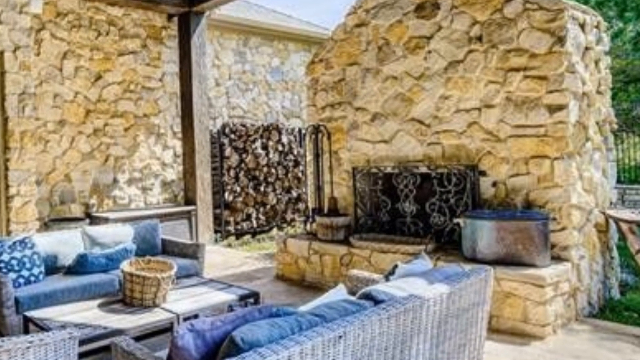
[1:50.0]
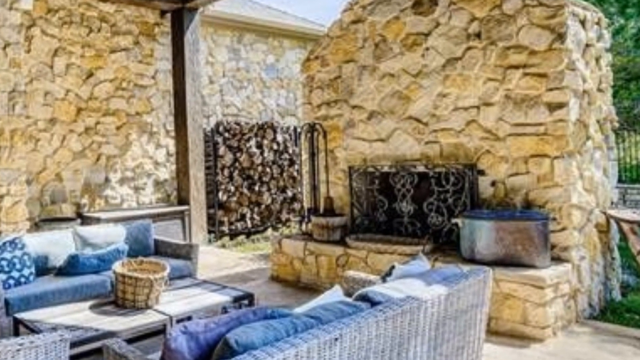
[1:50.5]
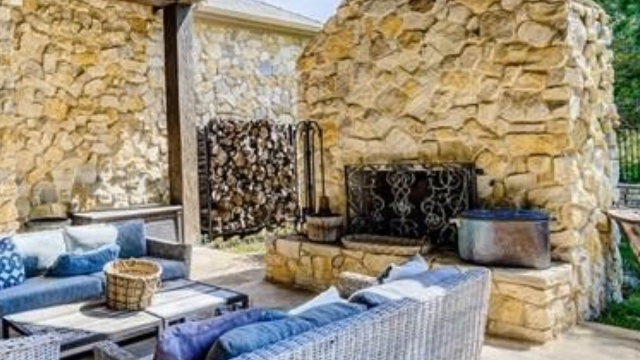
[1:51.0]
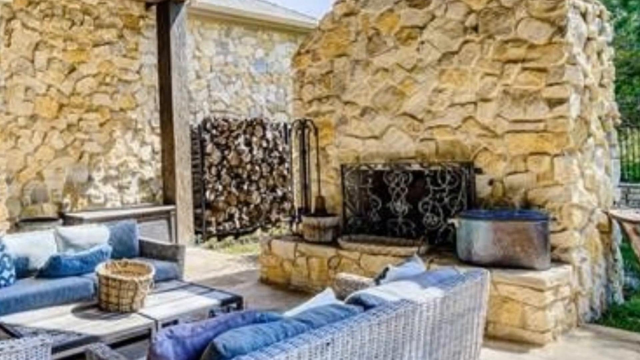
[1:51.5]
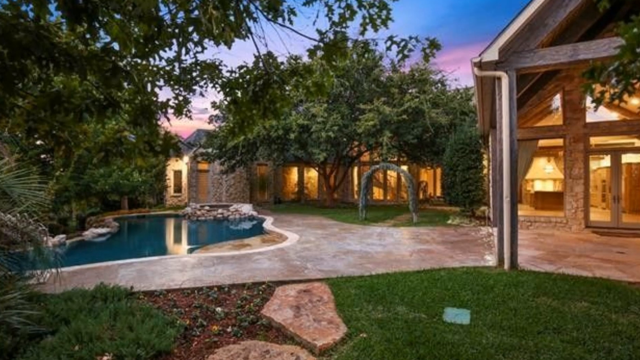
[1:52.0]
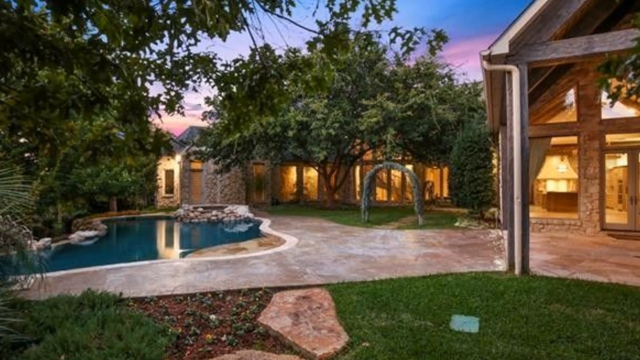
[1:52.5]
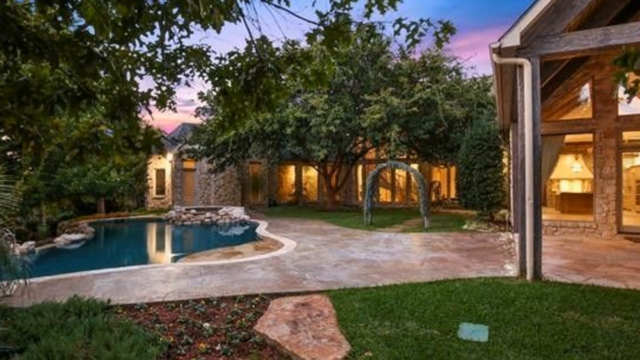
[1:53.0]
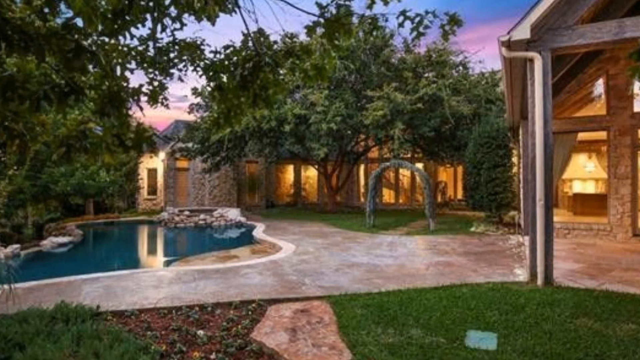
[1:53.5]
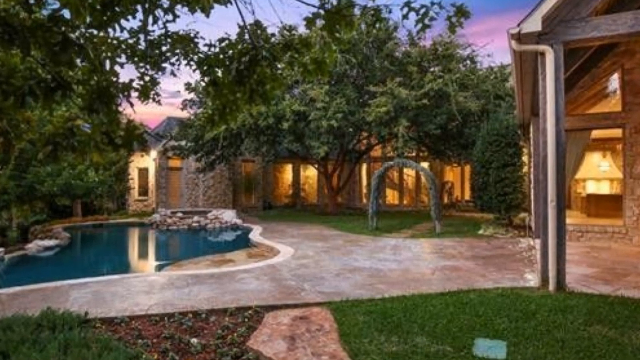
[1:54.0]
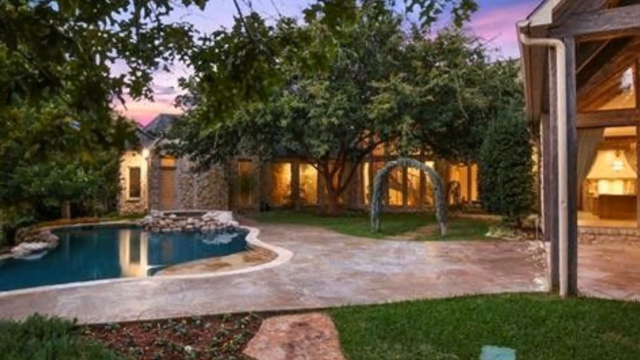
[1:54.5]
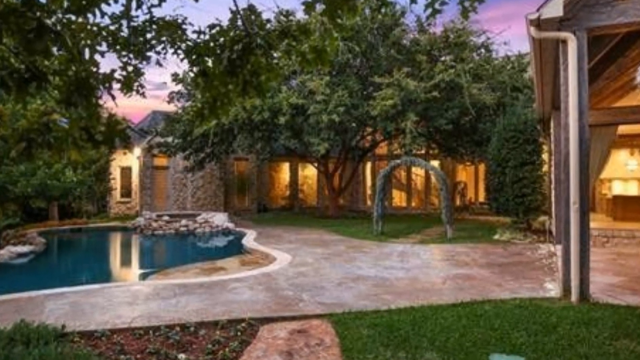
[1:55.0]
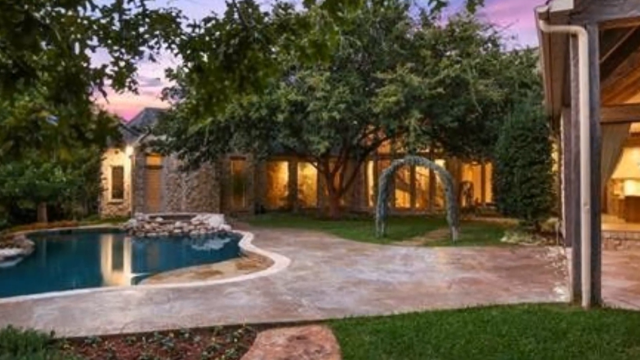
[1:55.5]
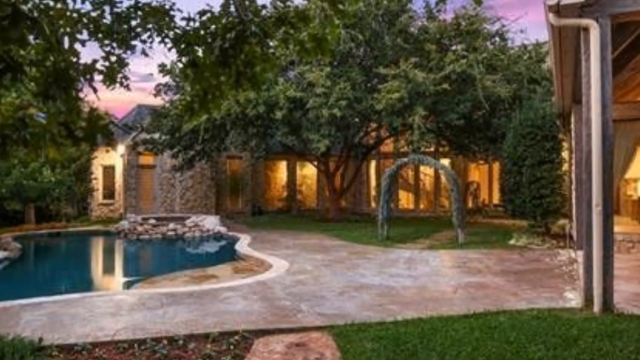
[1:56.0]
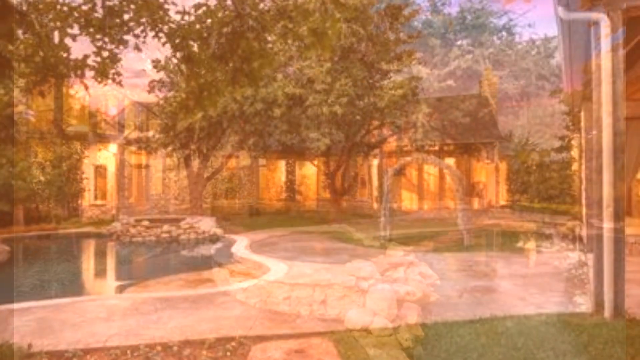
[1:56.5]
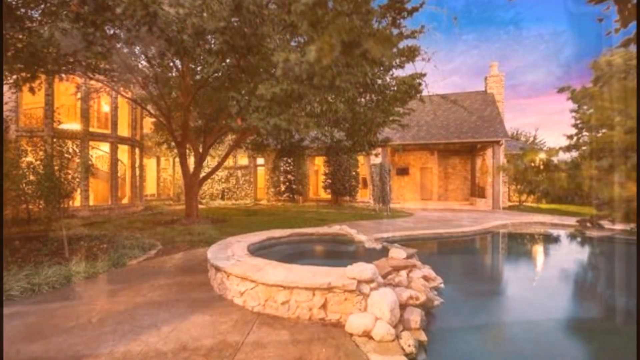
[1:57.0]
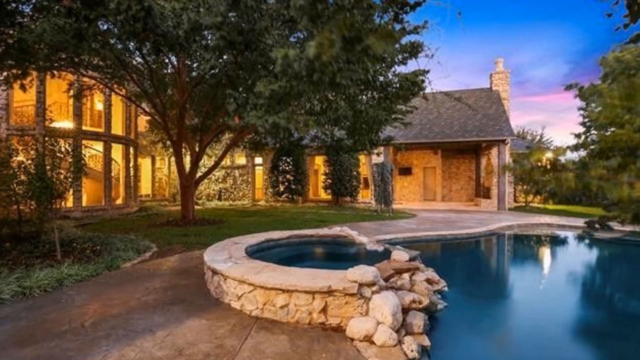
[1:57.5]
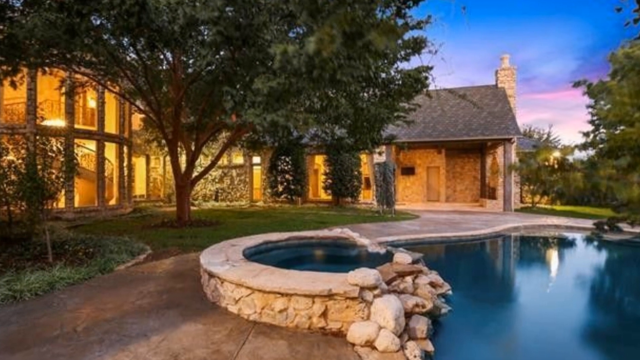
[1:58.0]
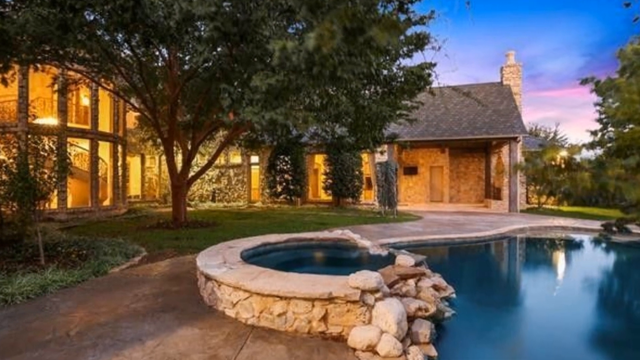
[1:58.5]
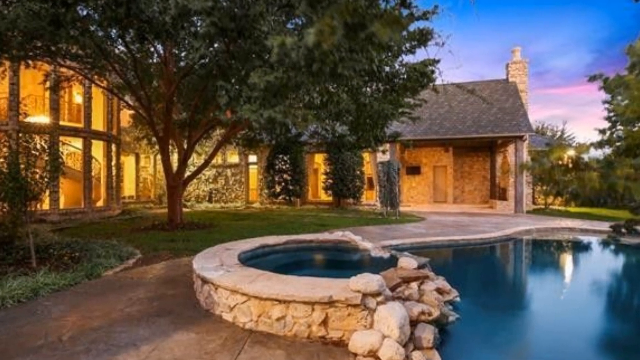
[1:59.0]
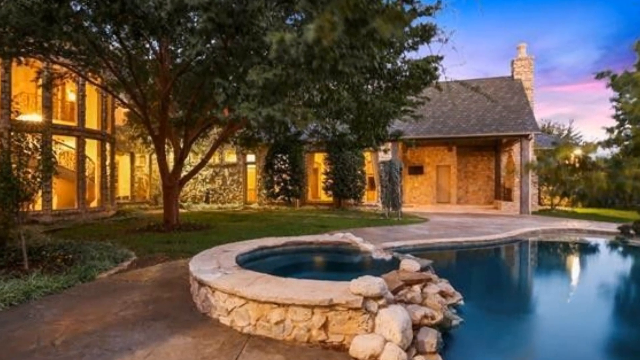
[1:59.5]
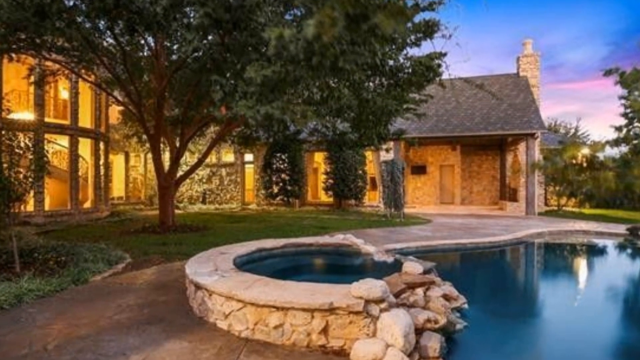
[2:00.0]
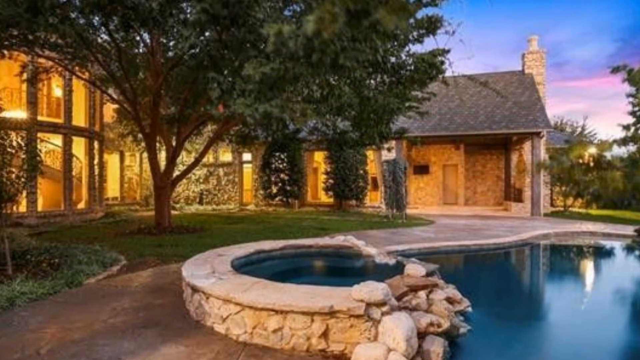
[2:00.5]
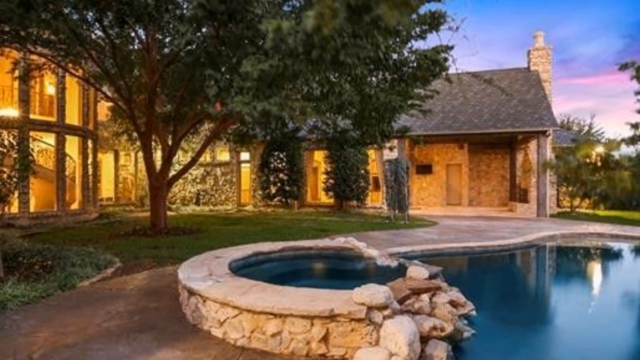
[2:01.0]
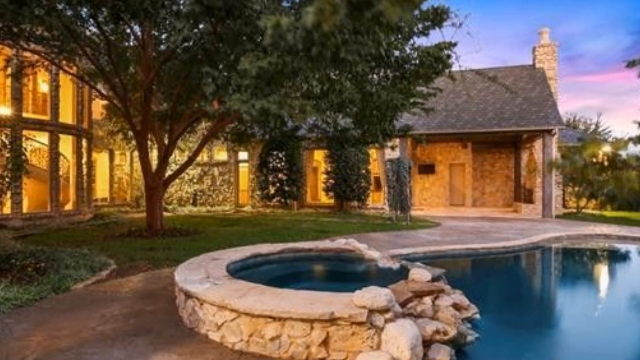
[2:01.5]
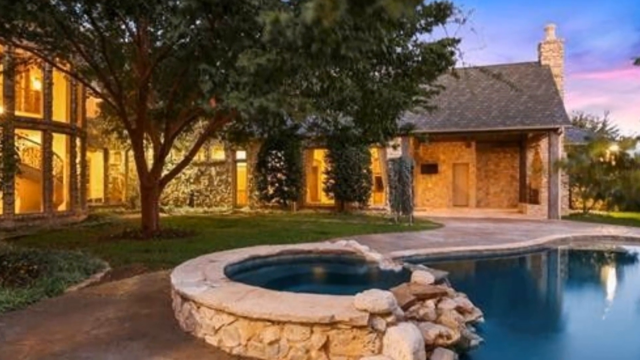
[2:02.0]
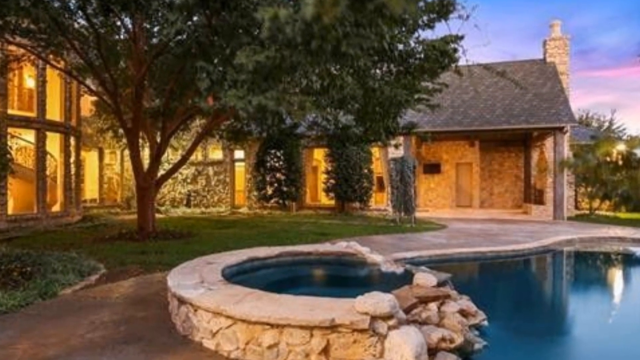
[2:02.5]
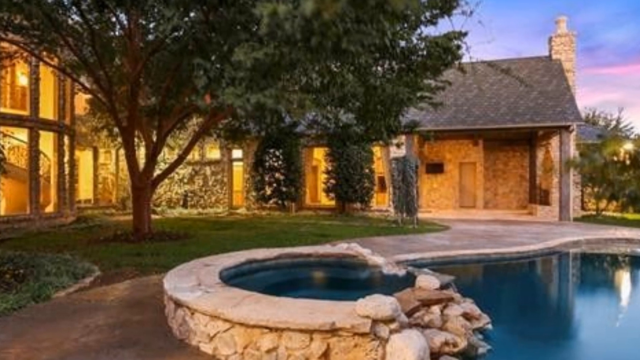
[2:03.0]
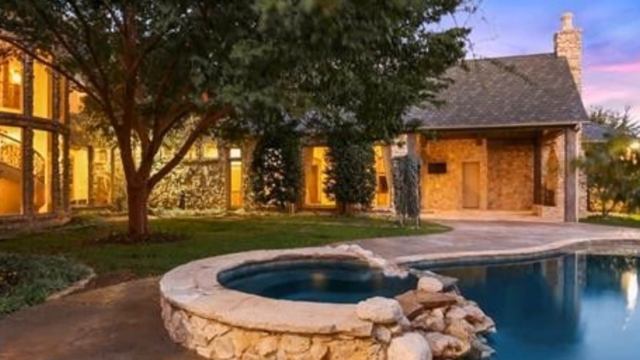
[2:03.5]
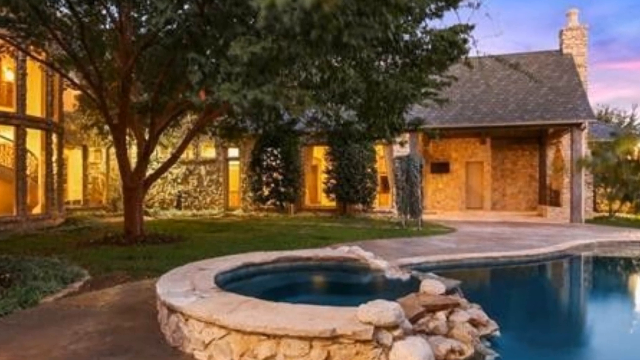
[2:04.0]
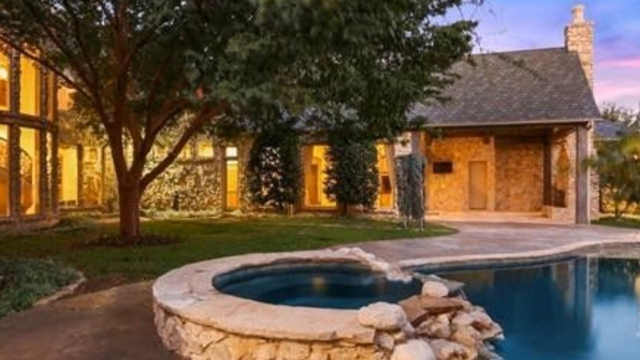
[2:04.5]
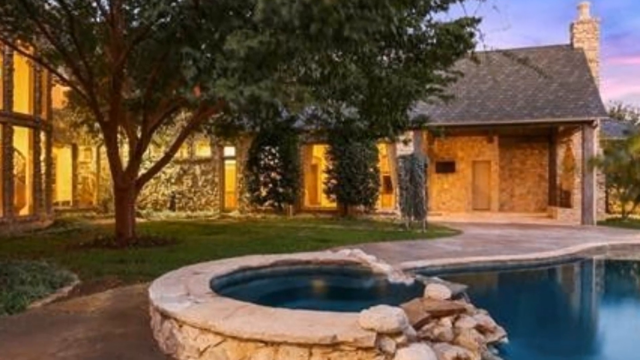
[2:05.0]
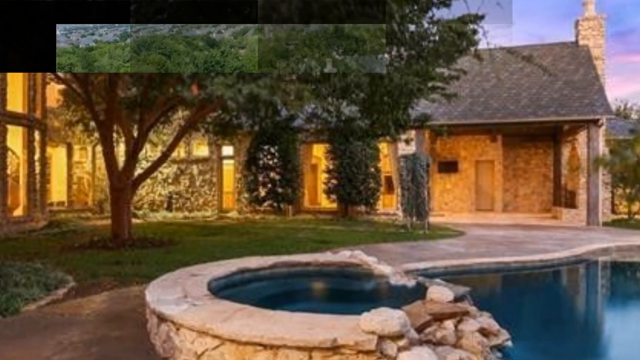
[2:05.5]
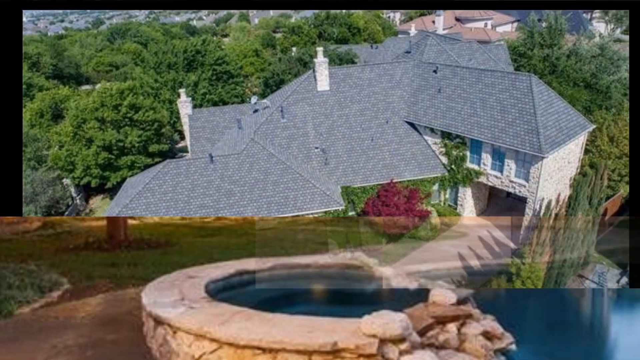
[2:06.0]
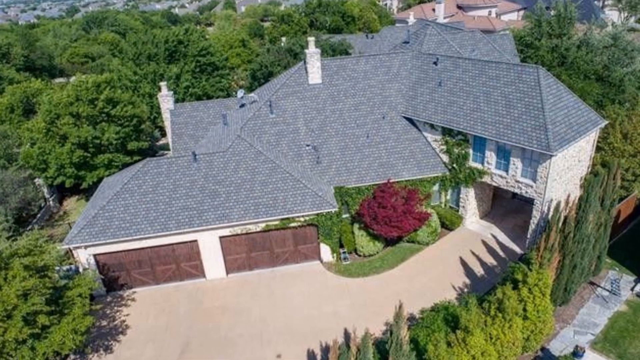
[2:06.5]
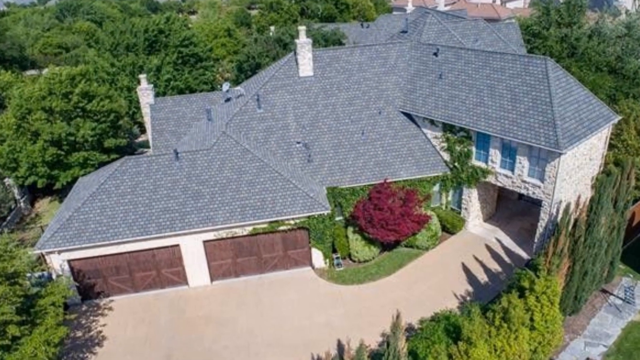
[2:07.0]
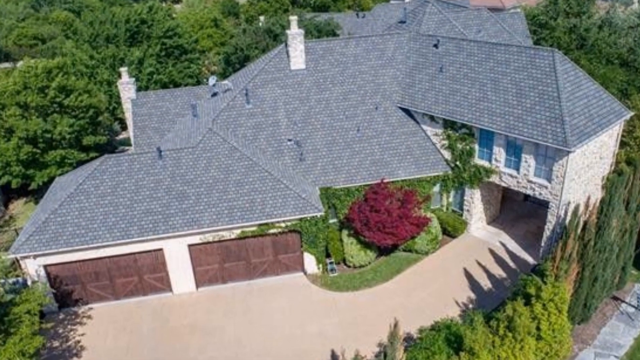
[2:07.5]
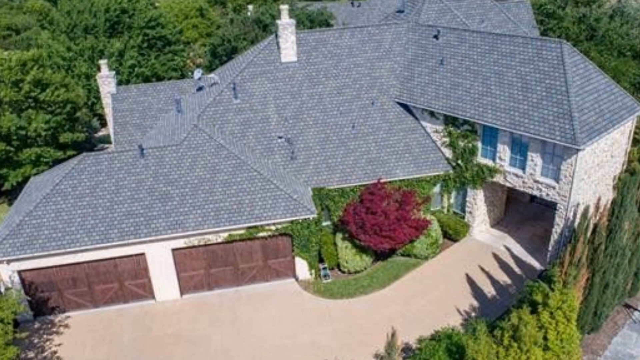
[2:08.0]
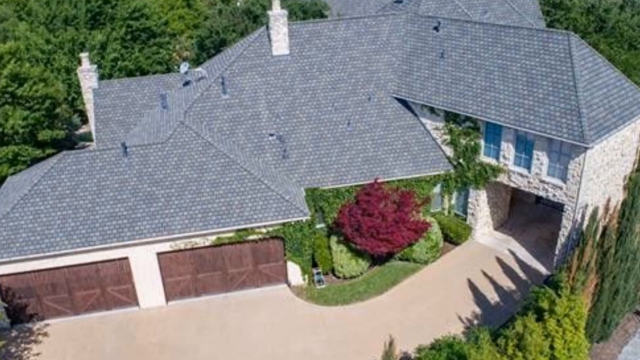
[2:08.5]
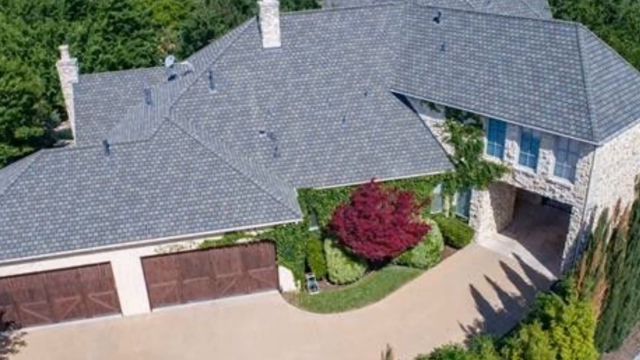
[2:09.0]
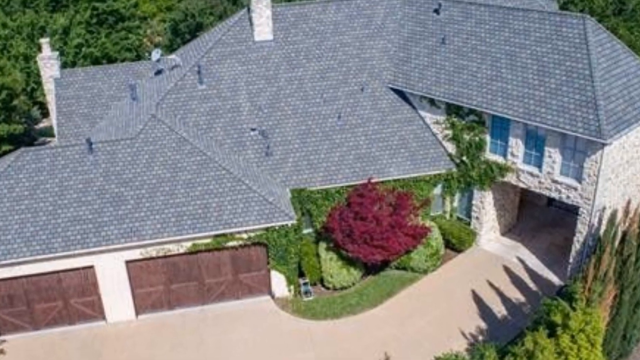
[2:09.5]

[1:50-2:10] More of the outside of the house is shown as the video cuts to a pool area. The pool does not look very big, and there appears to be a section of it that is possibly a jacuzzi. There is a walking path, a patio, and a stony walkway over to the pool, along with some grass and trees. The stone exterior is very prominent. A different angle of the pool shows in close-up detail what appears to be a jacuzzi or hot tub, built around a stone circle. The camera zooms in on it a bit more, showing blue water. The camera then changes to a higher, drone-like view, not quite bird's-eye, showing the top part of the house, including the roof and chimneys.